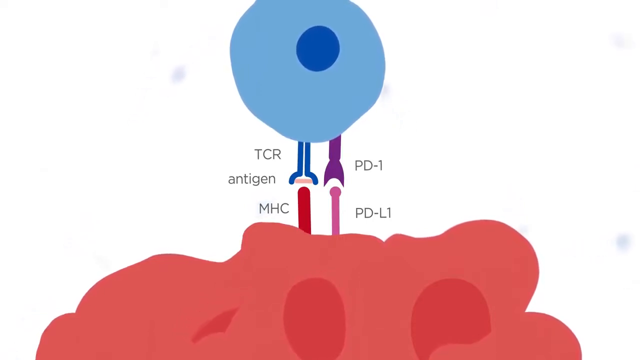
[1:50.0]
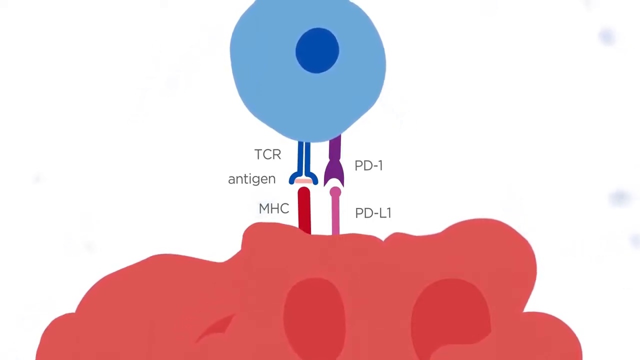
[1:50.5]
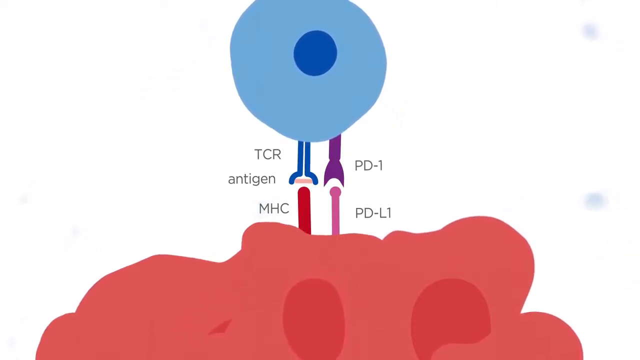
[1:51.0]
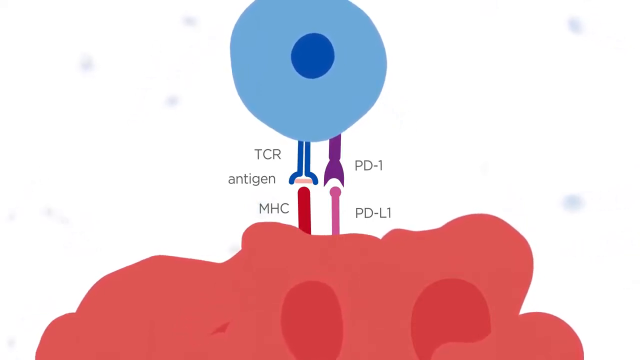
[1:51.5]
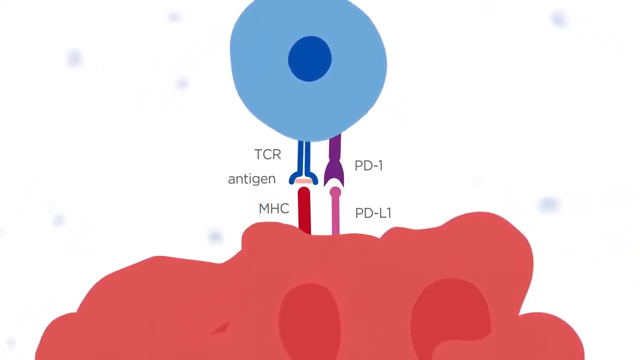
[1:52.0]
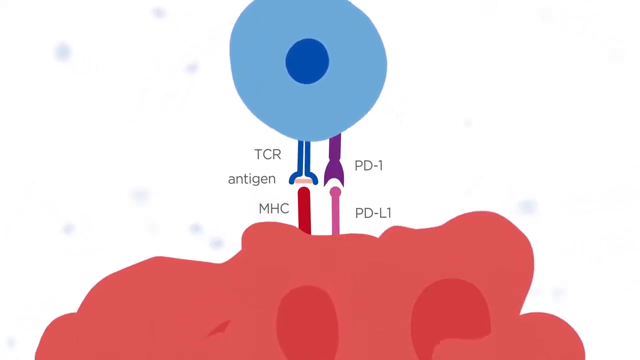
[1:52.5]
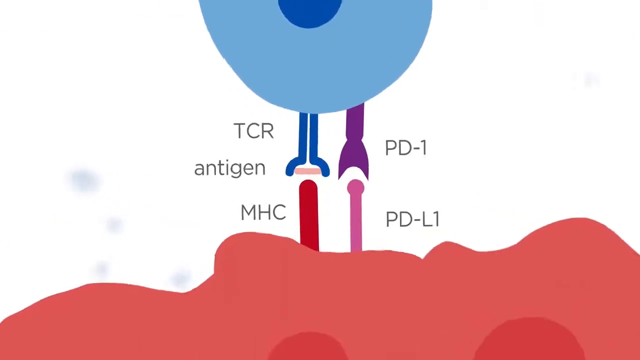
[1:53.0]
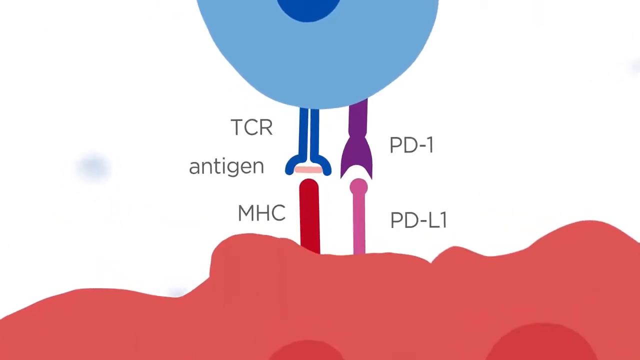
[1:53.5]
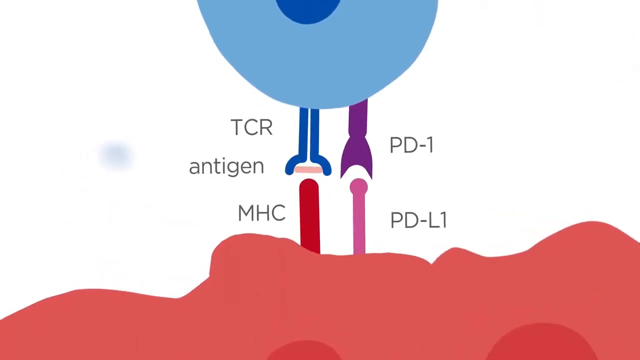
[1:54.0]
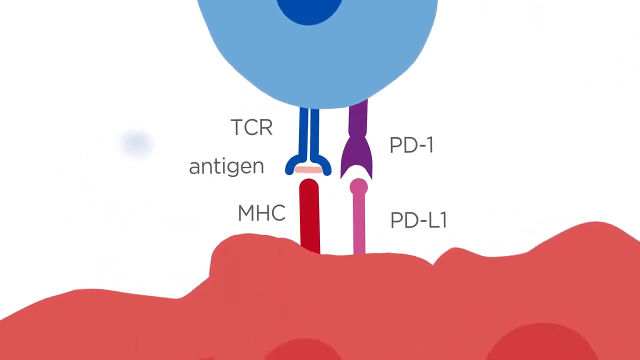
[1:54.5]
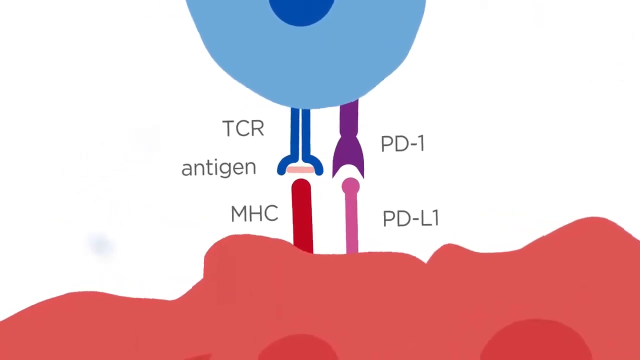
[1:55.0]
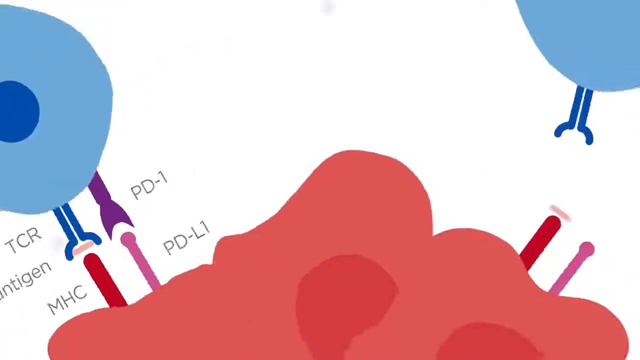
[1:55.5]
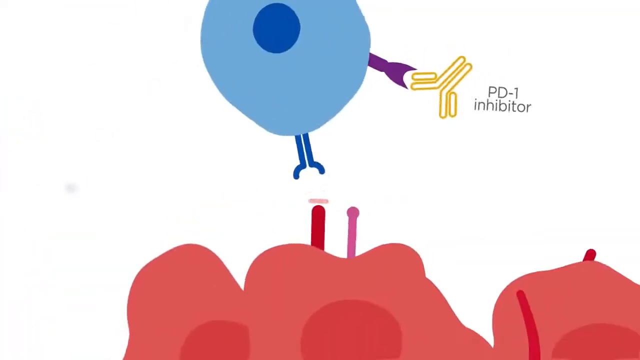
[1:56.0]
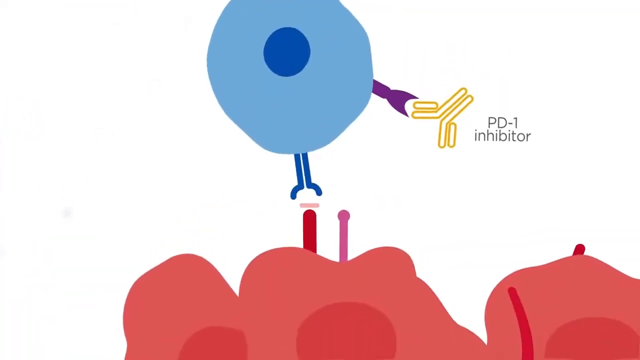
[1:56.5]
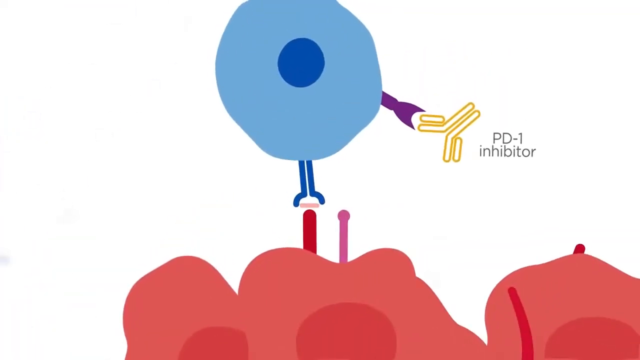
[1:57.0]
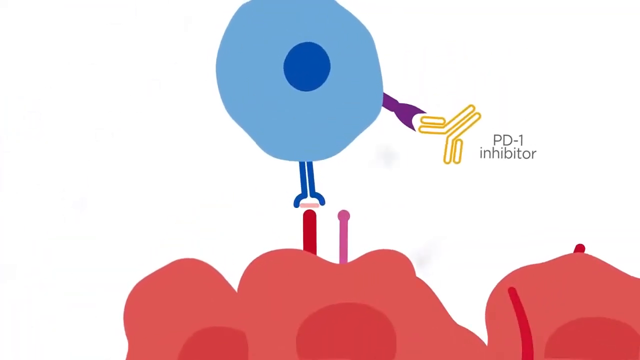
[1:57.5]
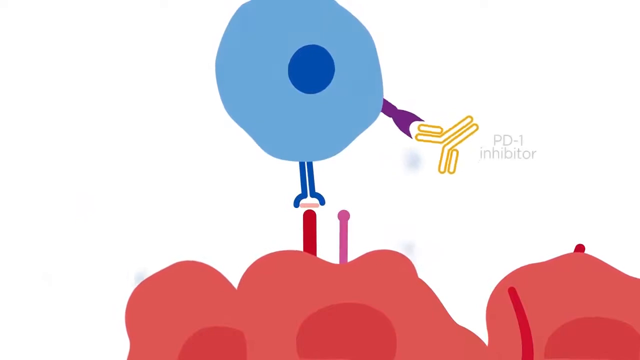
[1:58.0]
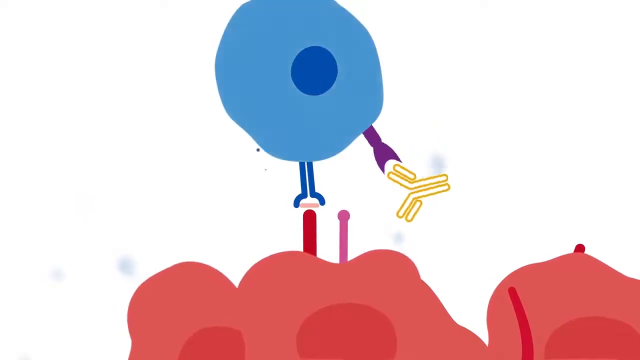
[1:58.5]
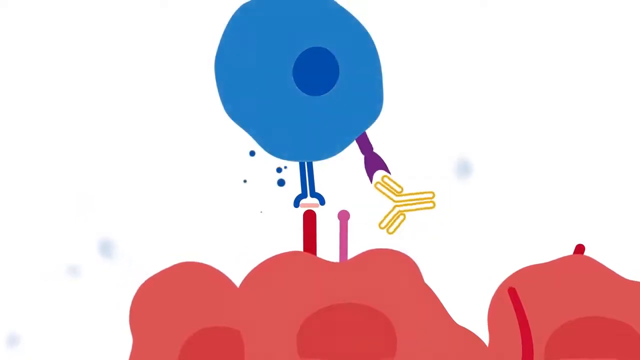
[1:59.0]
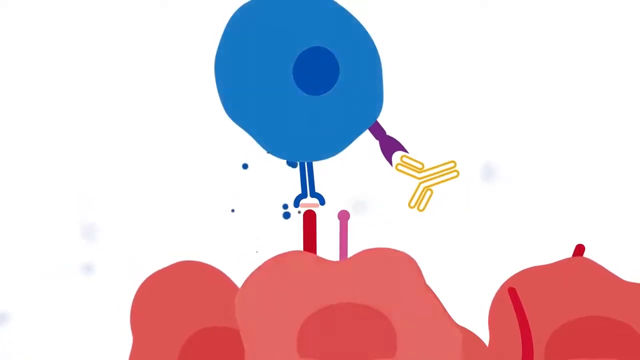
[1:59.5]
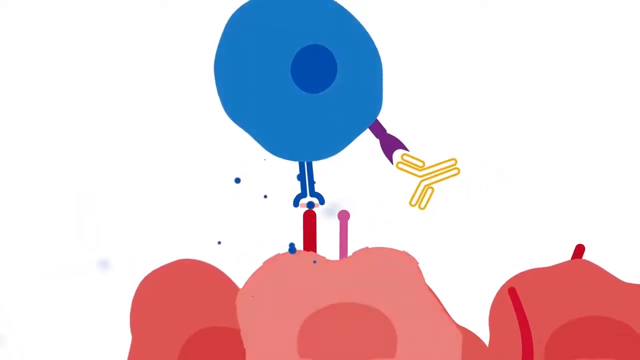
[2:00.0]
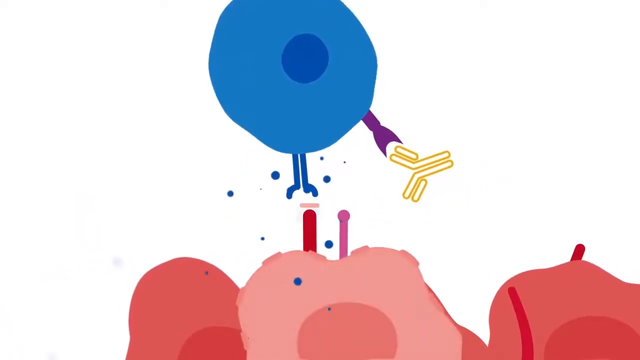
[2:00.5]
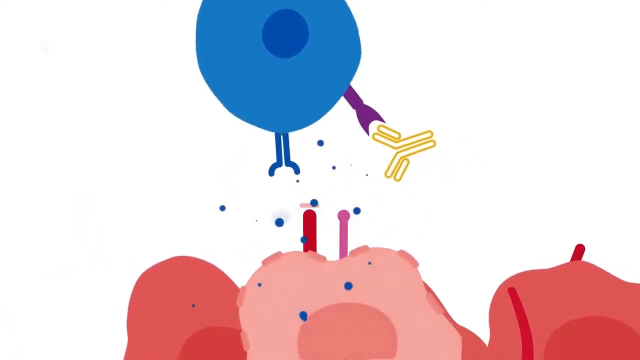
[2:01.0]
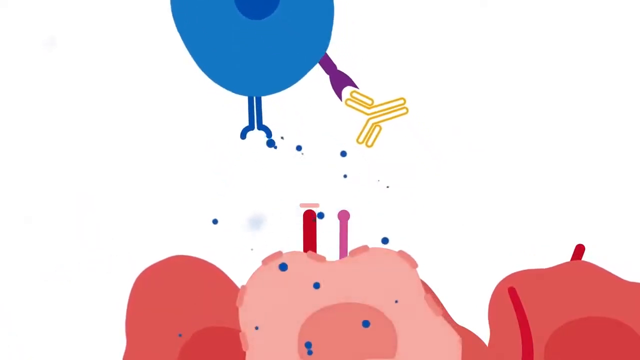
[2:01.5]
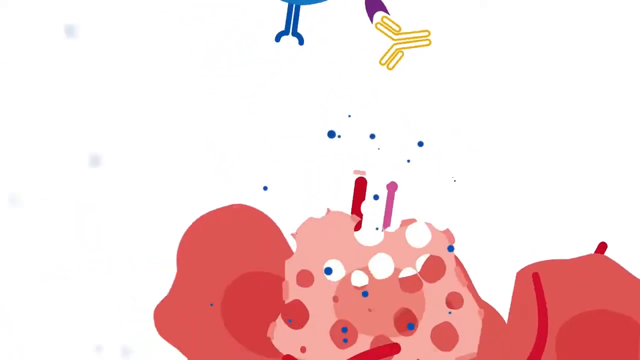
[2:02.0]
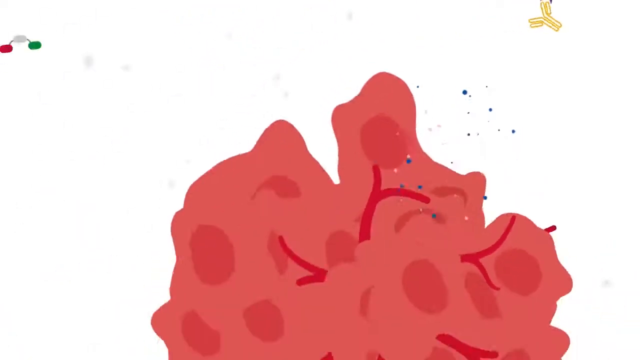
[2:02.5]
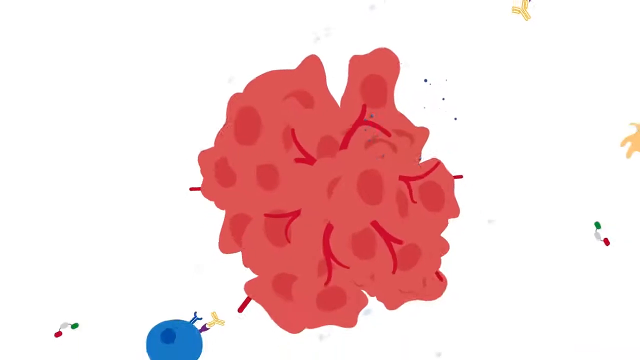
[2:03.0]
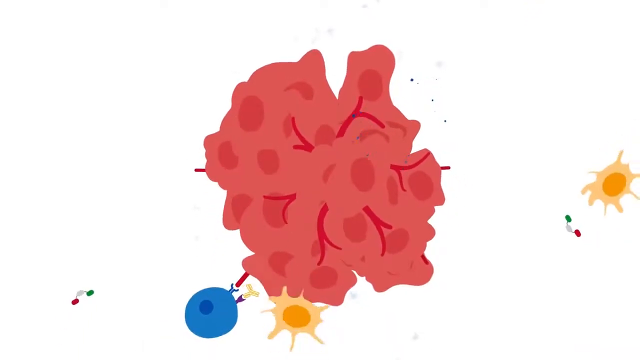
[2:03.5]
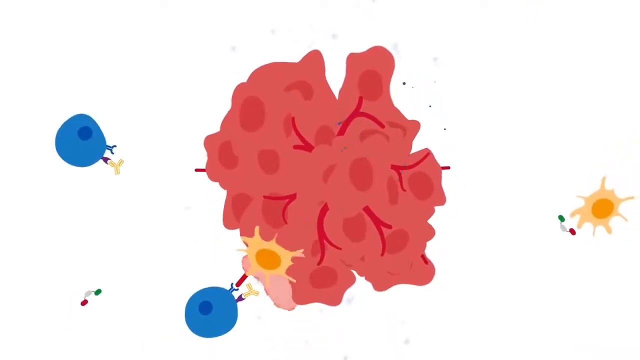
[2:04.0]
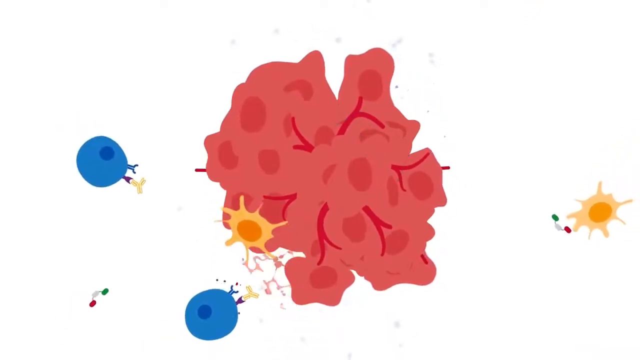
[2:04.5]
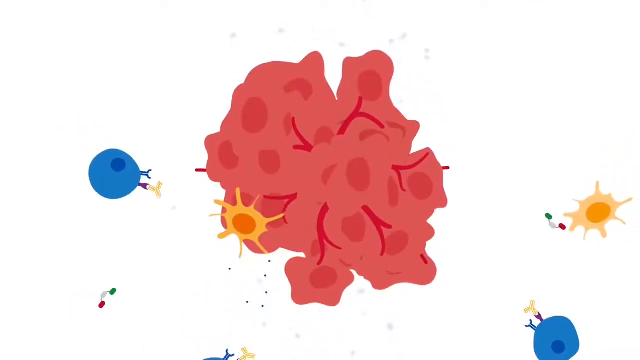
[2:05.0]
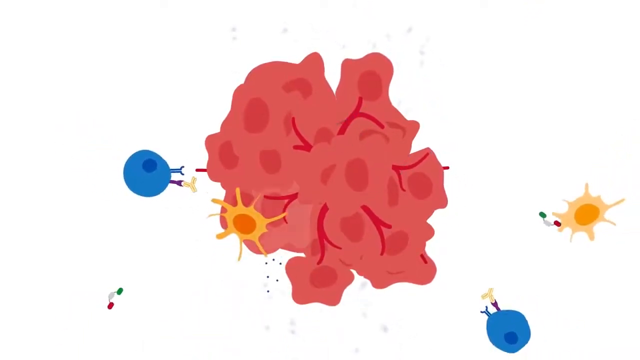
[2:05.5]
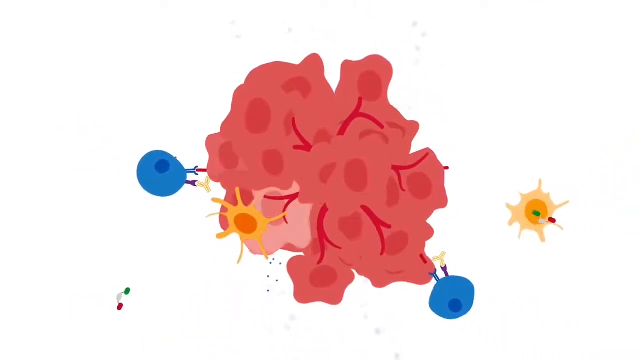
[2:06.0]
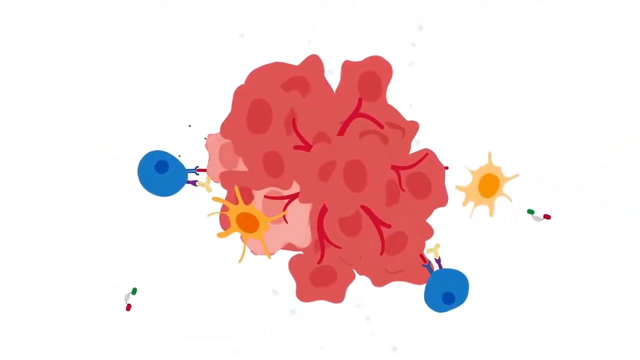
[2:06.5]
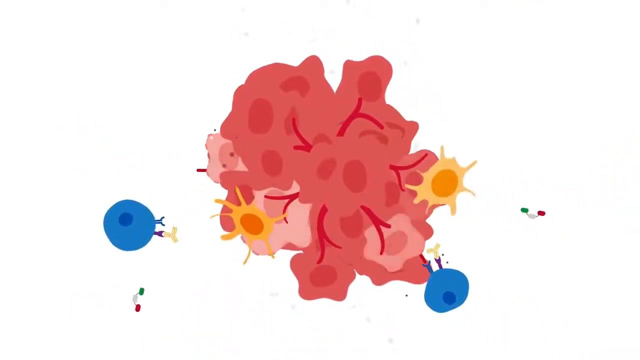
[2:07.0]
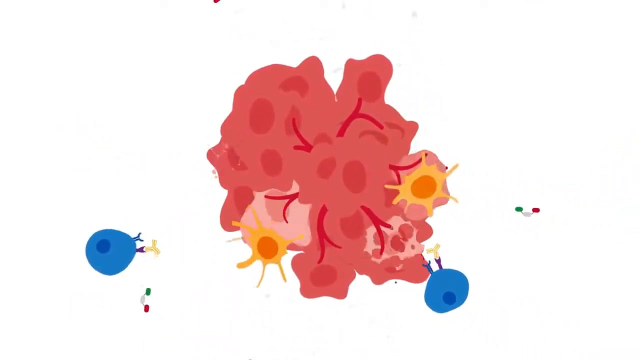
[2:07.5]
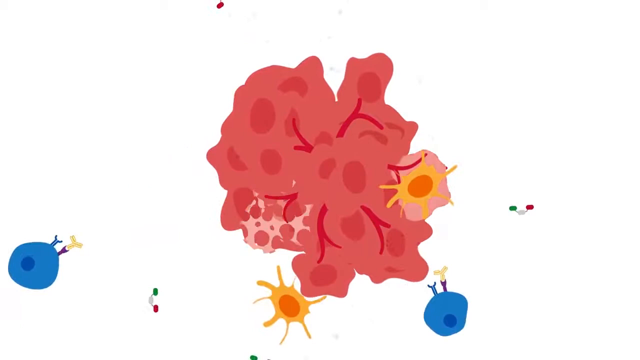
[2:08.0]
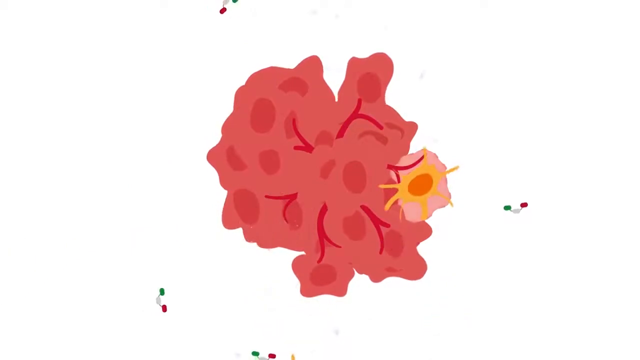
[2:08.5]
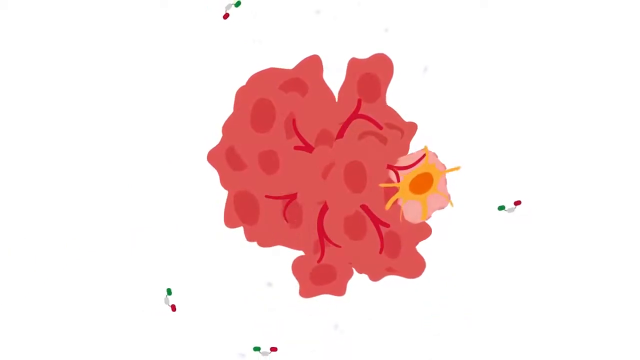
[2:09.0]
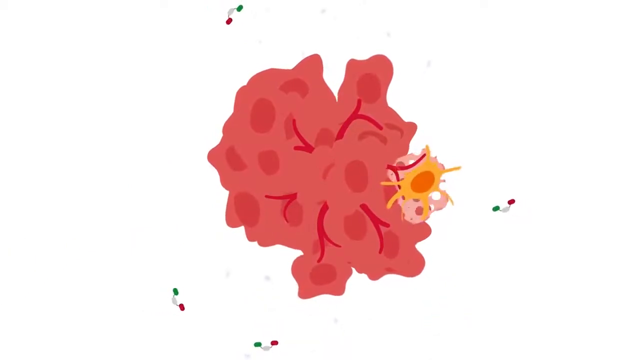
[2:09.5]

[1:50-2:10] The T-cell continues binding to the pink cell. The T-cell's binding pieces at the bottom are a purple-looking claw on the right side and a blue-outlined, somewhat claw-like piece on the left side. The binding pieces on the pink cell are a darker pink cylindrical vertical object on the left and a lighter pink object with a circle on top and a vertical rectangle. The view then turns clockwise to the right side and shows a different T-cell being bound at the bottom, with a blue binding on the left and a purple claw on the right grabbing onto some type of yellow triangular object made out of lines. It tries to swing the purple claw down but is not able to bind, then releases some type of blue circular objects and flies away. The video zooms back out to what looks to be the cell, with various T-cells on the bottom left and left side of the image animating and taking out portions of the cell that look to be bad.